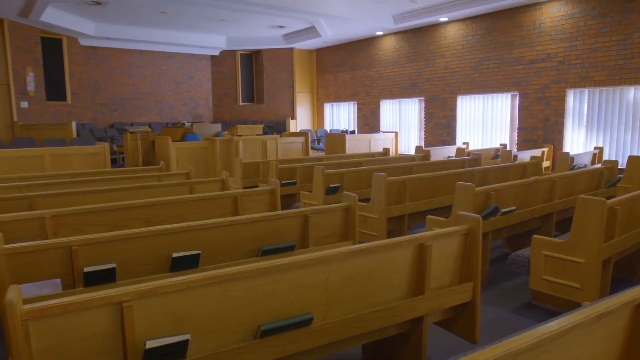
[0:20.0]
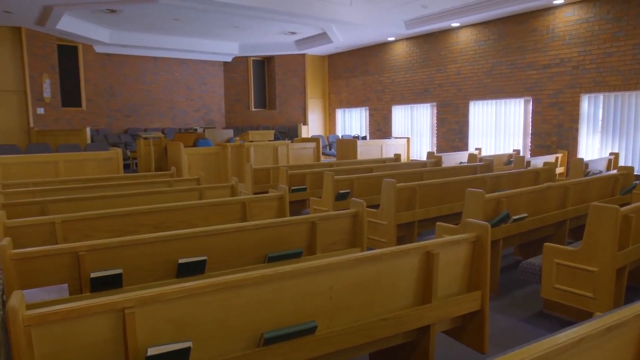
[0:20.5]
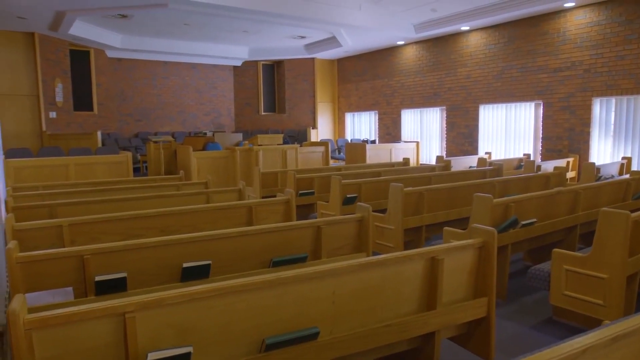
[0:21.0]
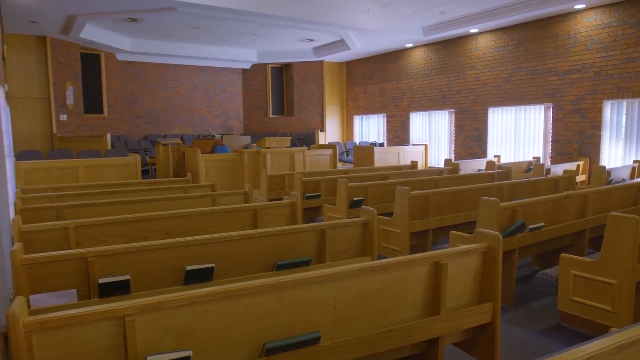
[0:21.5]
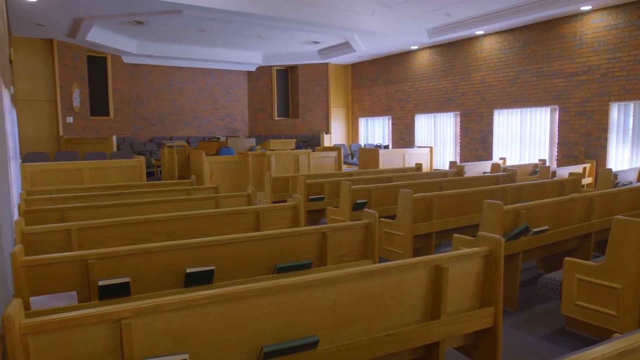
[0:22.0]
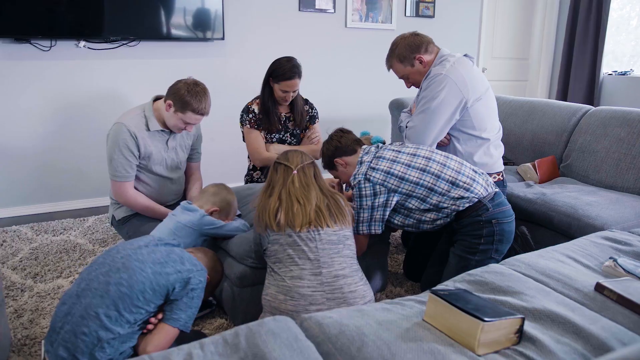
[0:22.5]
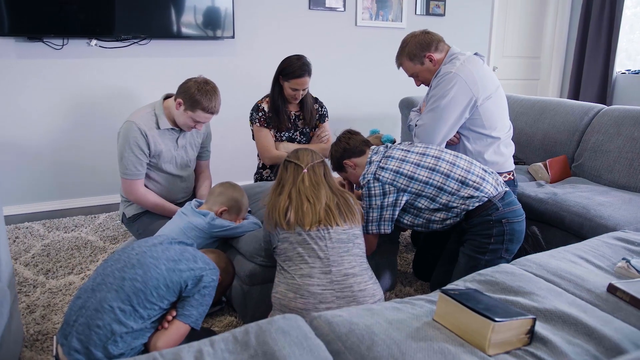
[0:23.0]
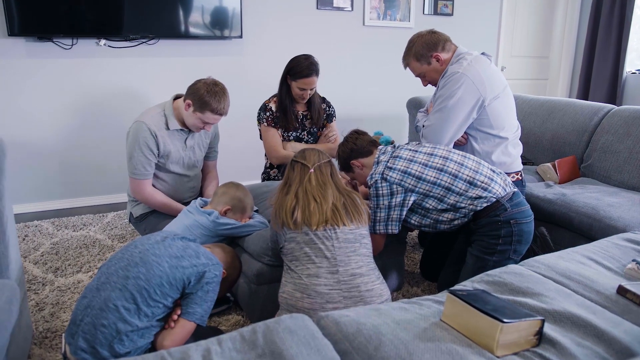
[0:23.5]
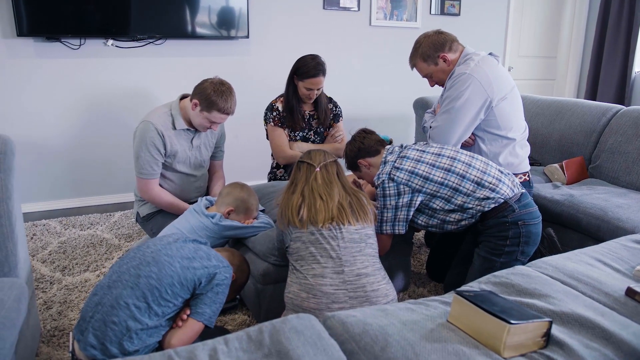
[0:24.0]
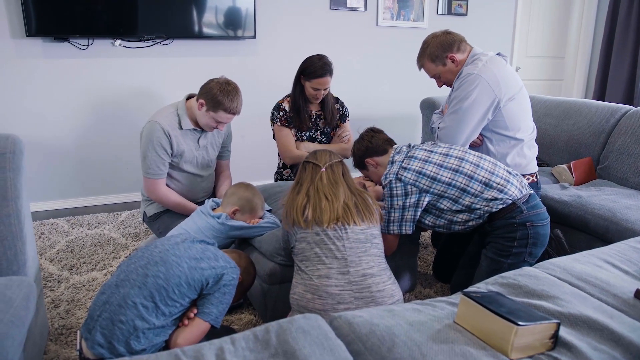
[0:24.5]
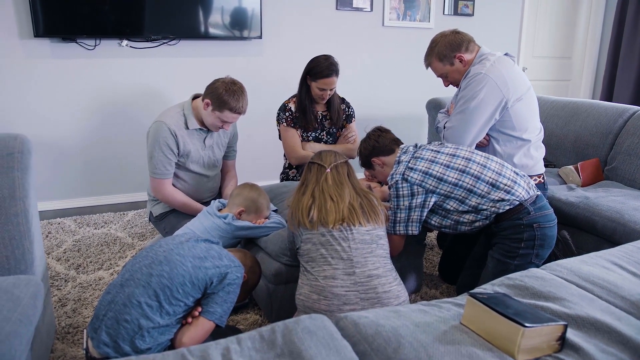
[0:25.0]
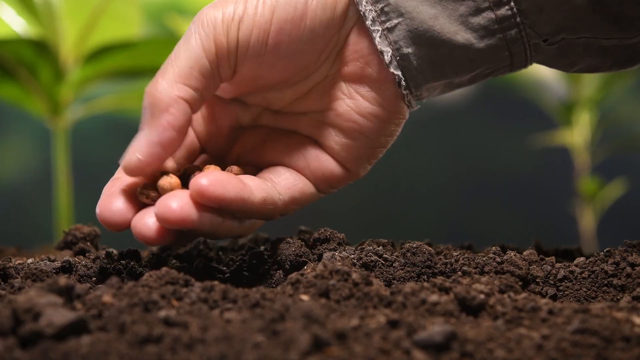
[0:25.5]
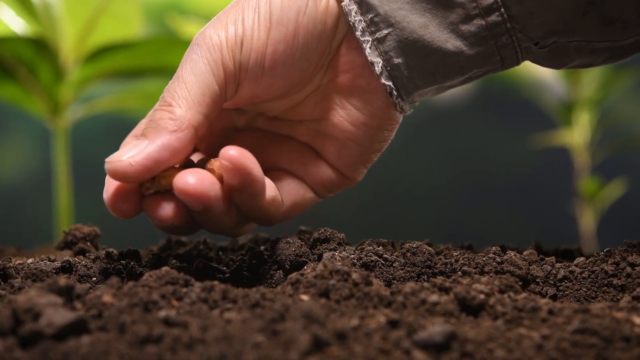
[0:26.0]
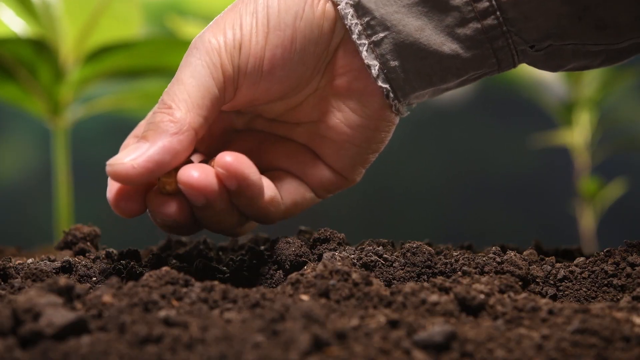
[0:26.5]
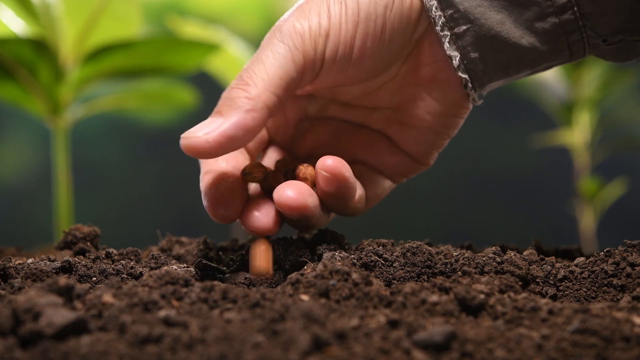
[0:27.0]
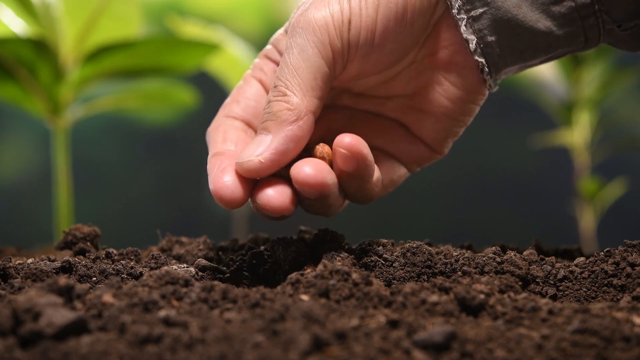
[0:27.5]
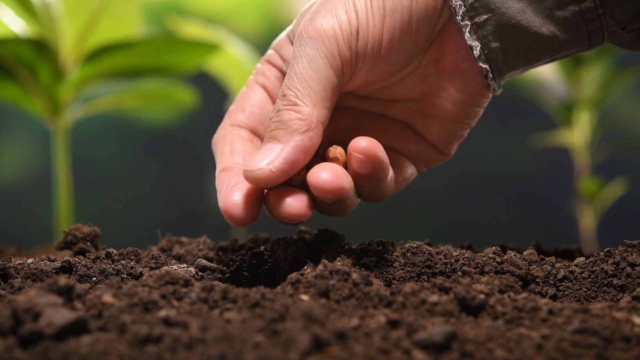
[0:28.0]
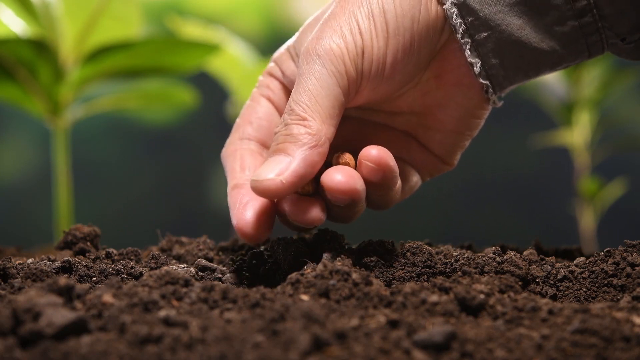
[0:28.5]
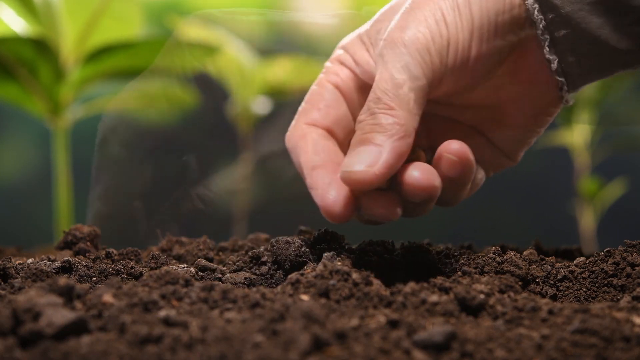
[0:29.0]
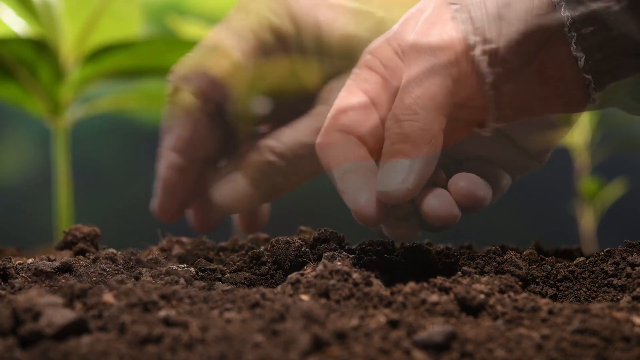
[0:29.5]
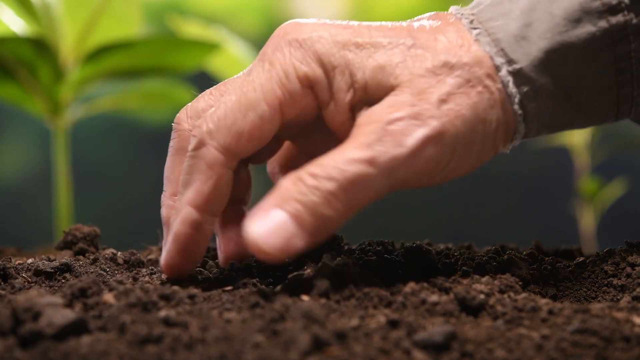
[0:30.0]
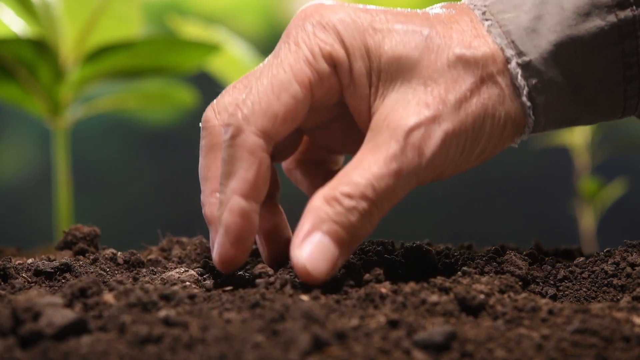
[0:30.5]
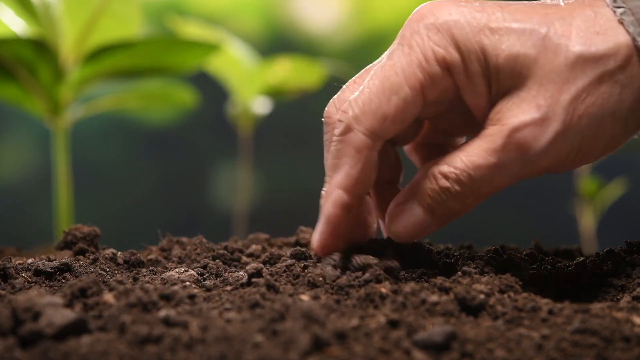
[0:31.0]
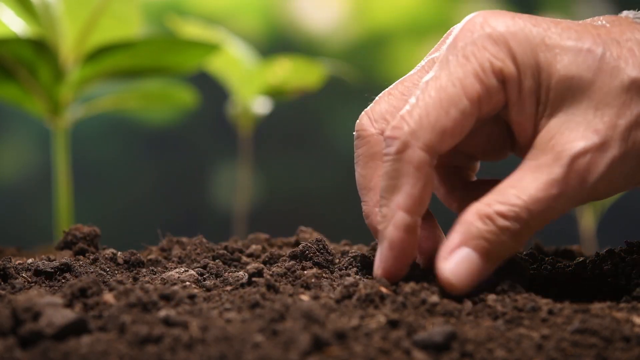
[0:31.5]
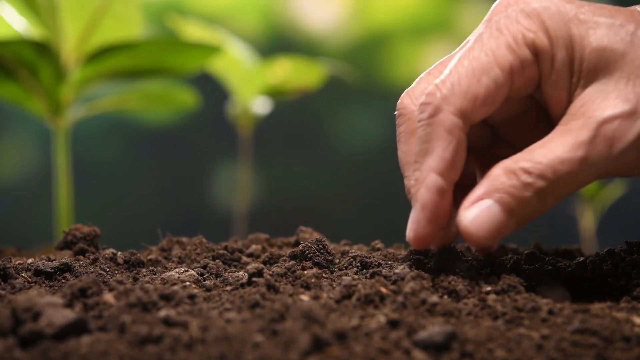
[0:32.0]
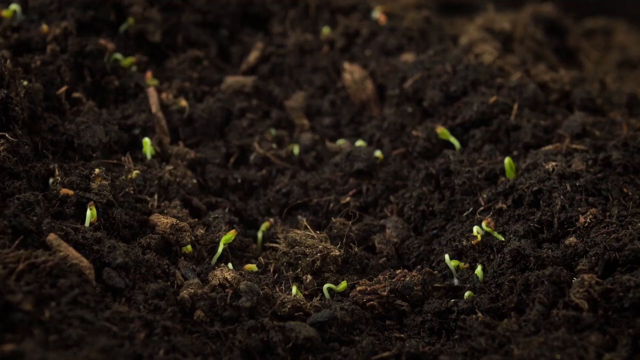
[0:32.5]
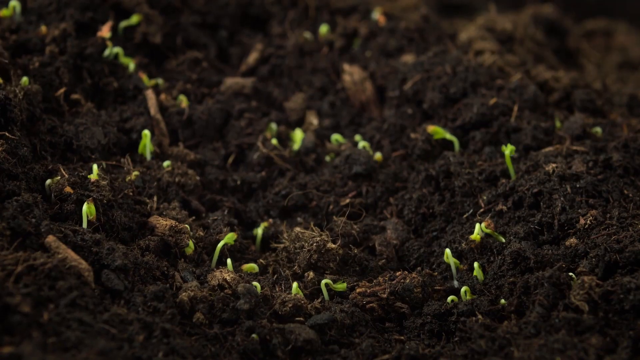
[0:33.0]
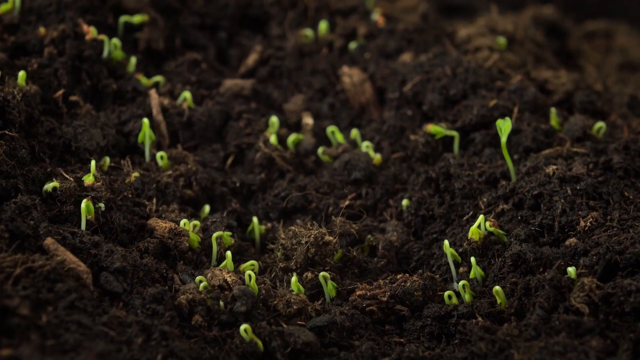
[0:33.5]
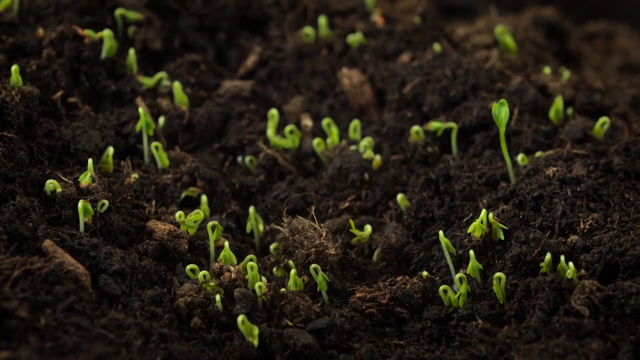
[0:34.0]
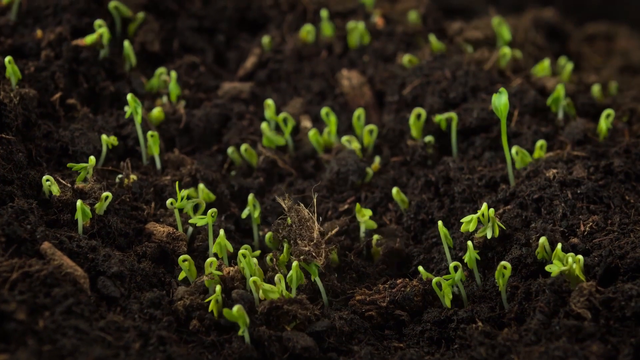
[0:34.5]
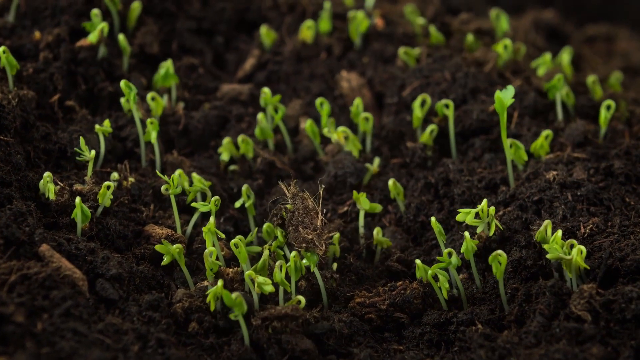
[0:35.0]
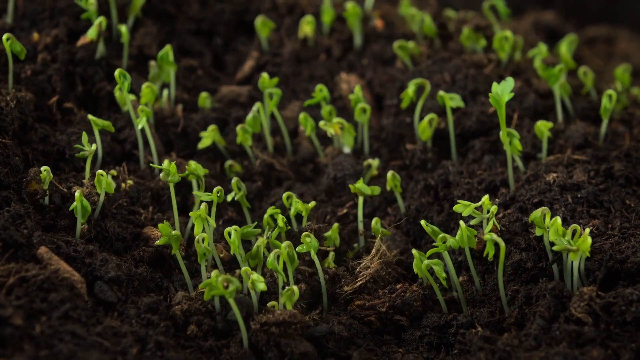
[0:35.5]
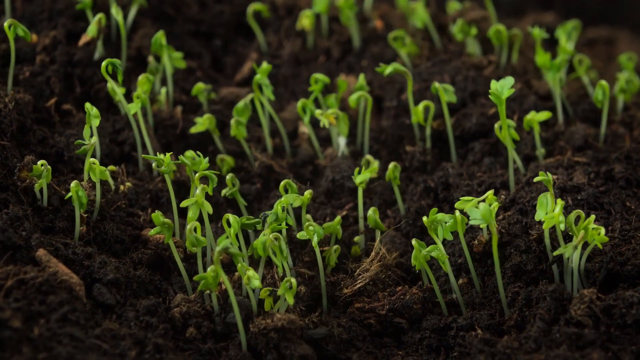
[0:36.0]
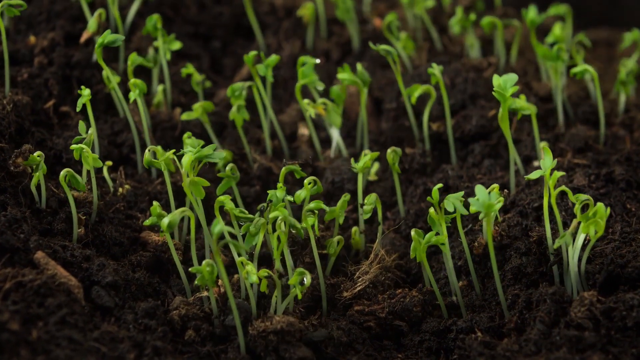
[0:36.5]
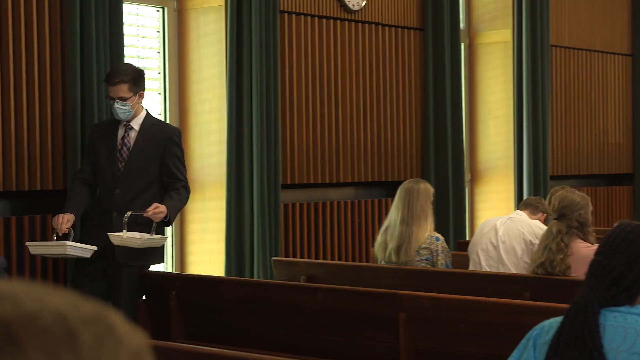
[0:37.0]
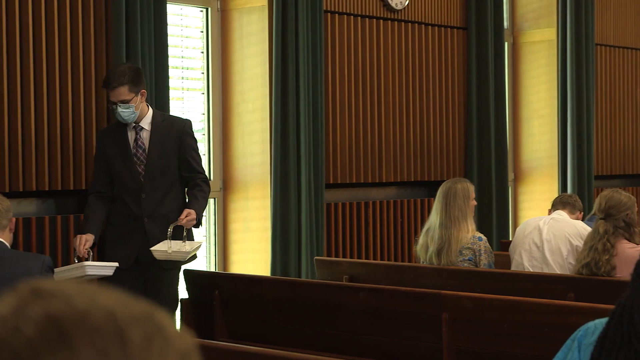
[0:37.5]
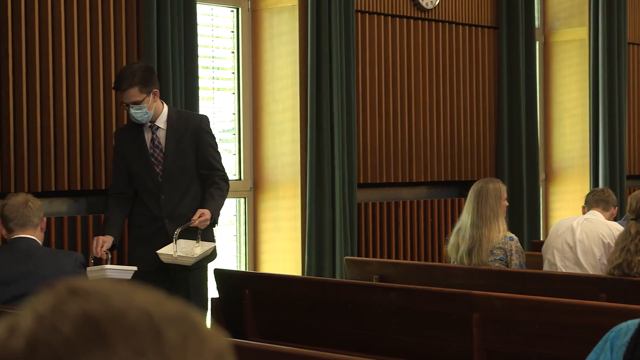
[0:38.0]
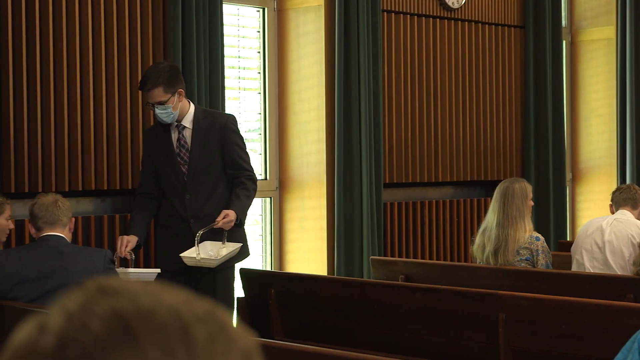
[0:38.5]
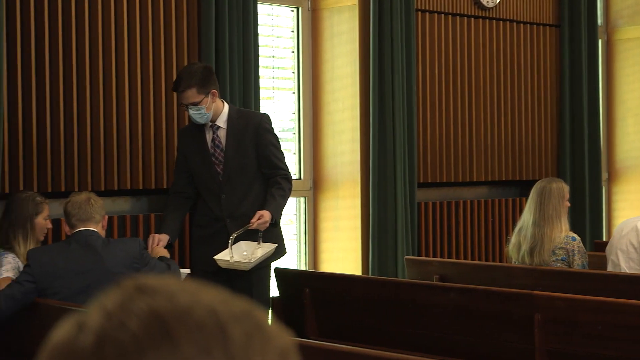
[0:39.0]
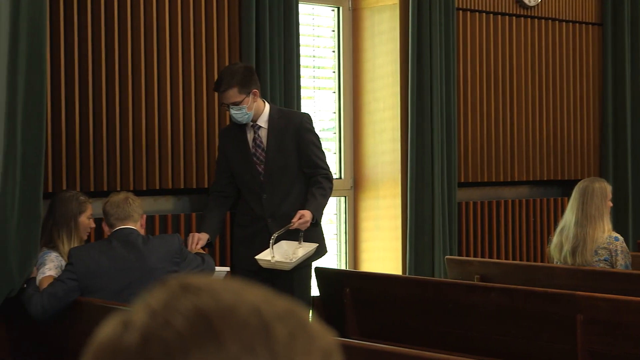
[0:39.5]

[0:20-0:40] There is no title, but on-screen text reads "Voice of Dieter F. Uchtdorf, Quorum of the Twelve Apostles." An empty church appears, with pews of light-colored wood and some brick. A group of about six or seven people, counting two kids, meets in a house instead, praying around an ottoman and a couch in a living room. A hand plants seeds that look like garbanzo beans and covers them with dirt, and time-lapse shows them sprouting very fast. In a church, people give offerings as a man in a suit passes baskets along the right-hand side of the pews; he holds two white baskets with very thin gold handles, one in each hand. The sides of the building appear to have sound-absorbing panels.